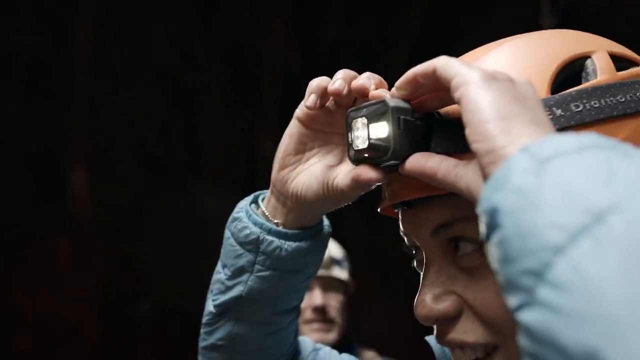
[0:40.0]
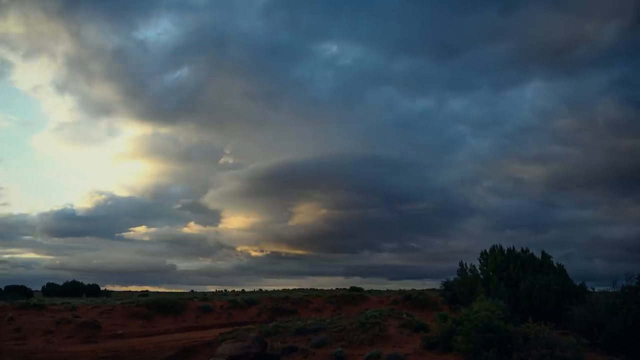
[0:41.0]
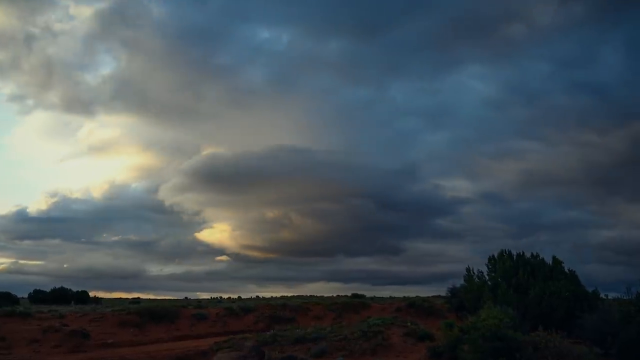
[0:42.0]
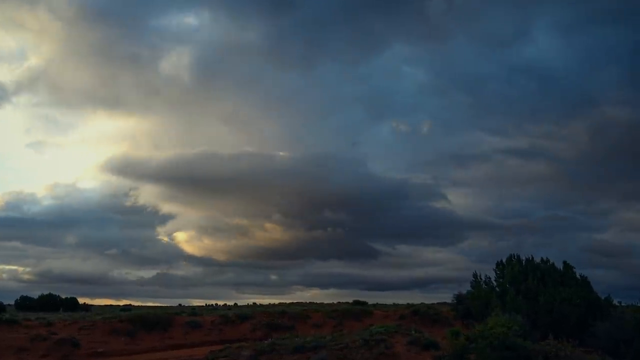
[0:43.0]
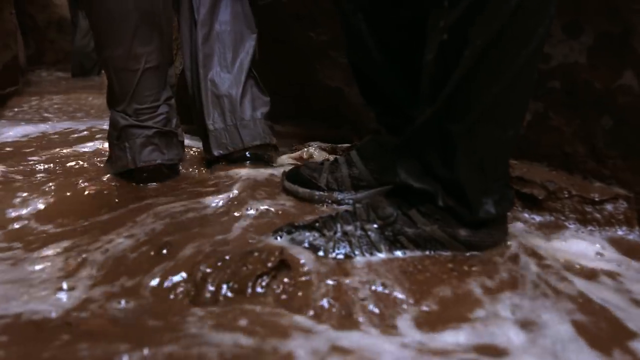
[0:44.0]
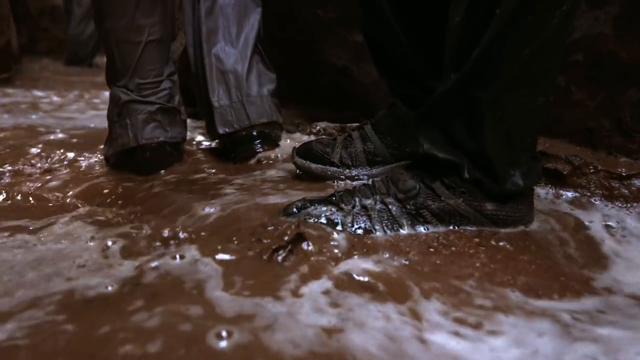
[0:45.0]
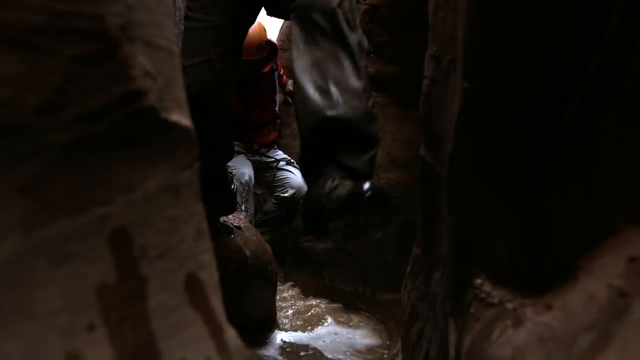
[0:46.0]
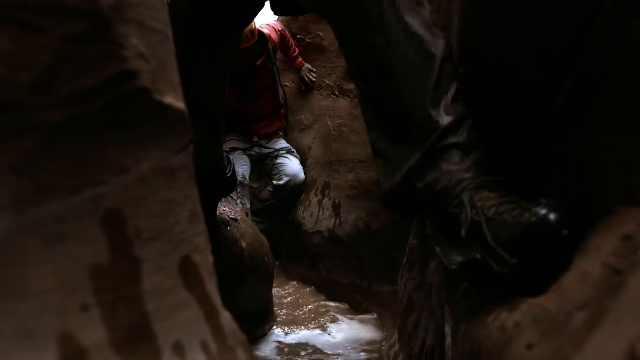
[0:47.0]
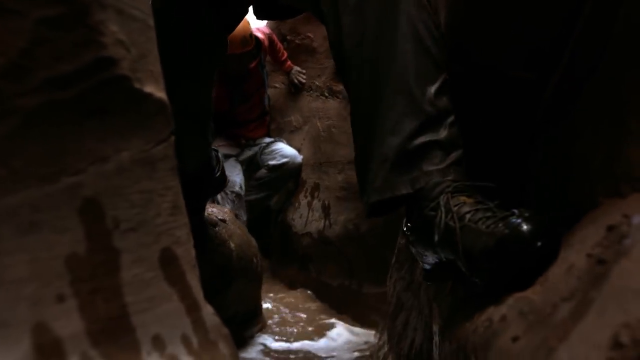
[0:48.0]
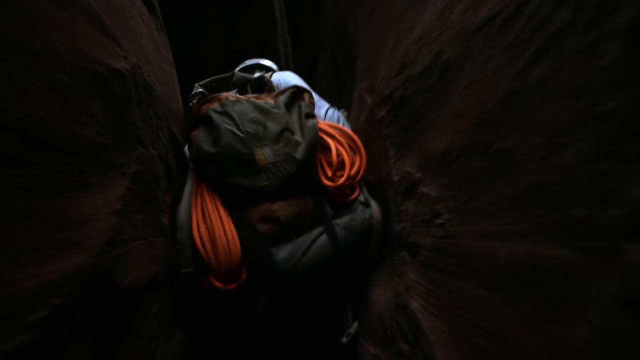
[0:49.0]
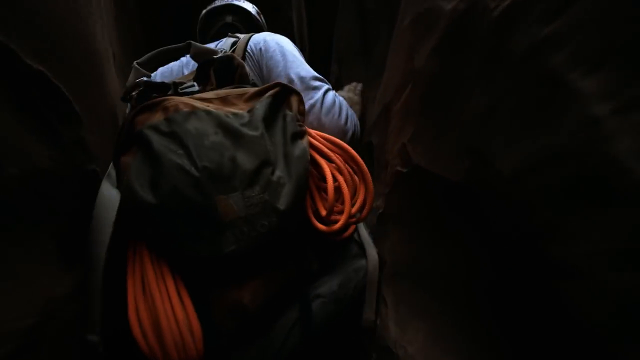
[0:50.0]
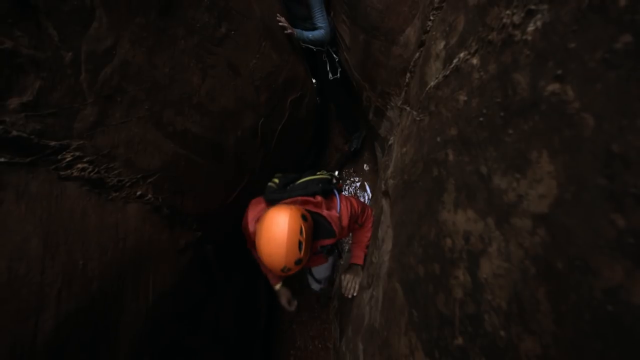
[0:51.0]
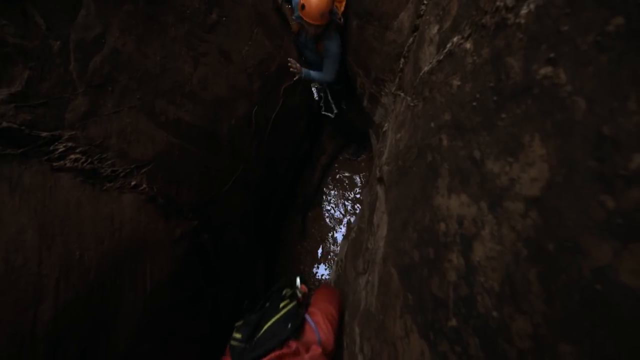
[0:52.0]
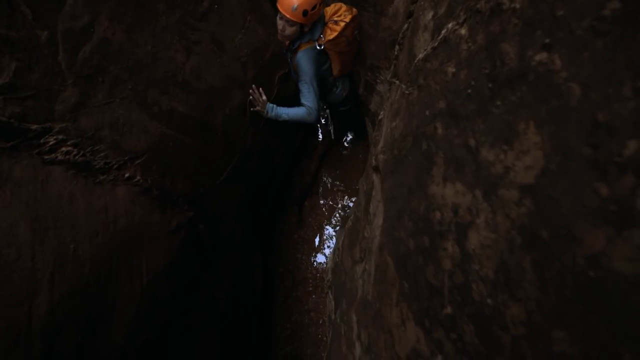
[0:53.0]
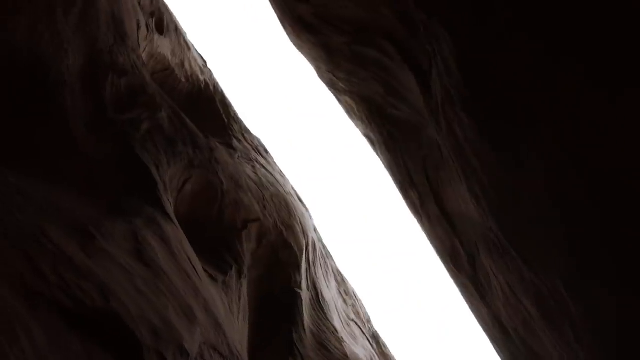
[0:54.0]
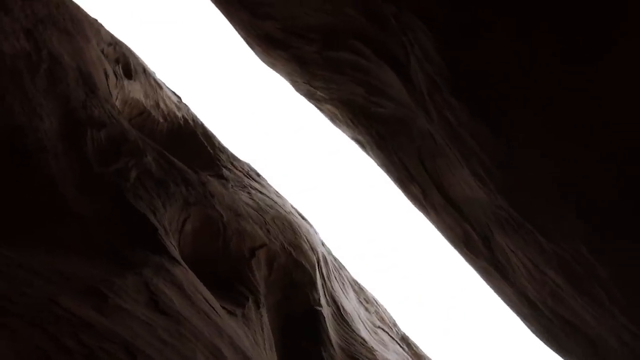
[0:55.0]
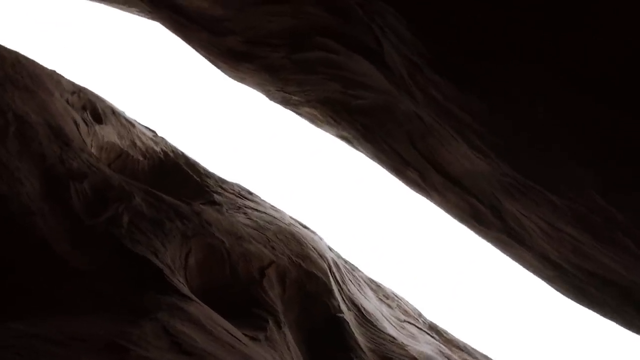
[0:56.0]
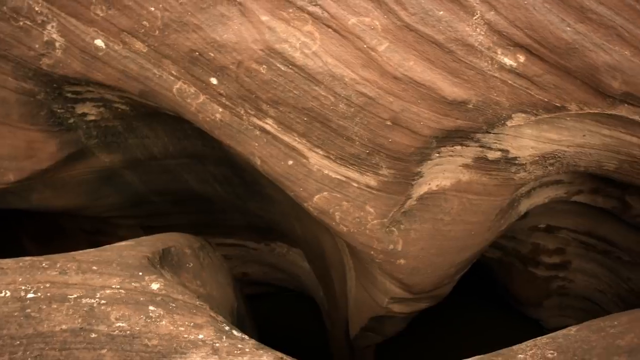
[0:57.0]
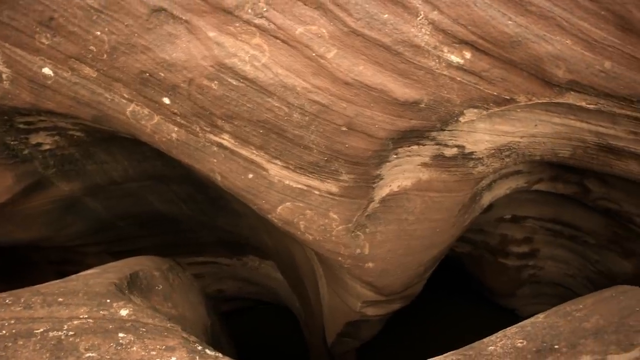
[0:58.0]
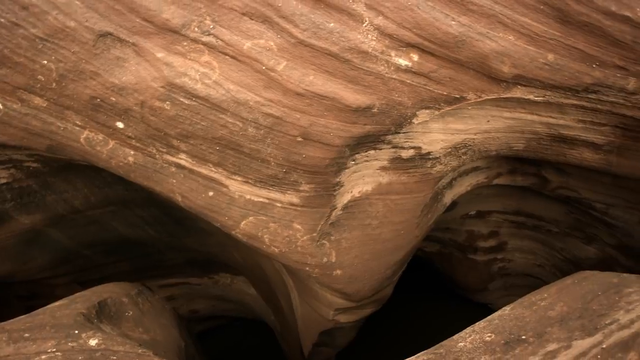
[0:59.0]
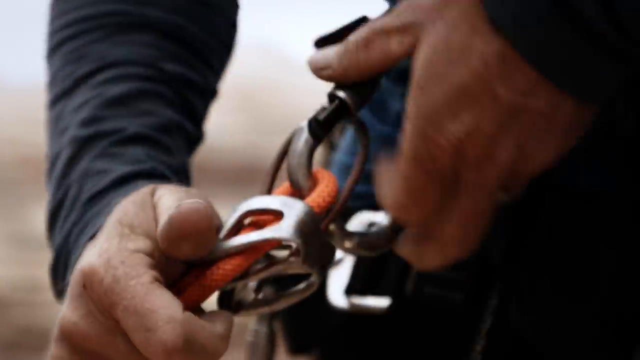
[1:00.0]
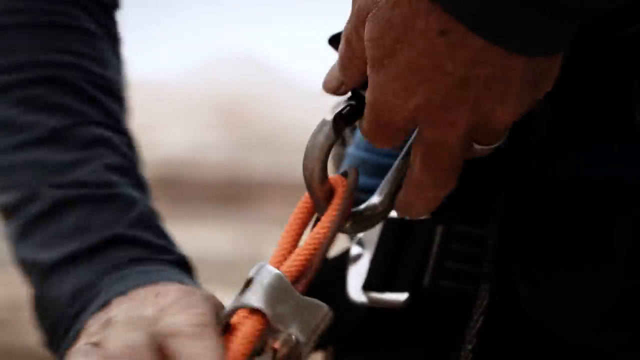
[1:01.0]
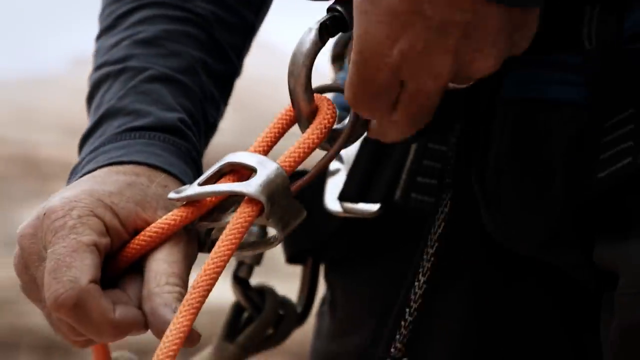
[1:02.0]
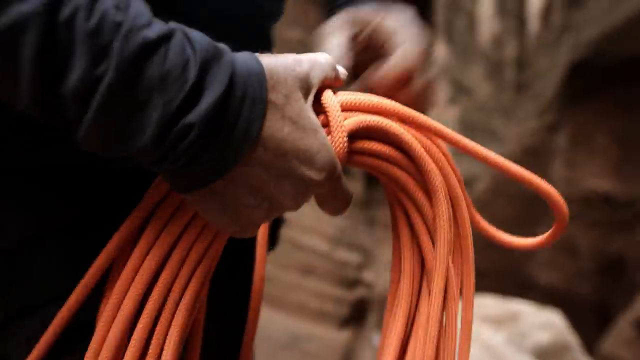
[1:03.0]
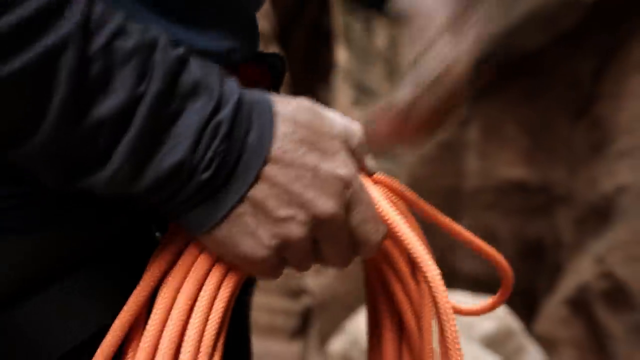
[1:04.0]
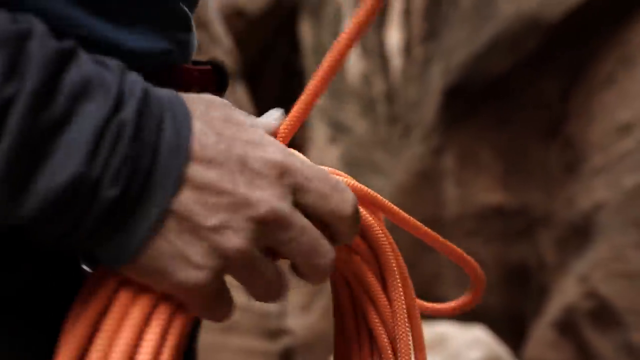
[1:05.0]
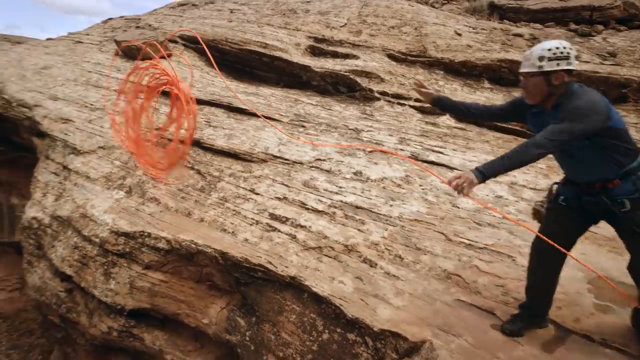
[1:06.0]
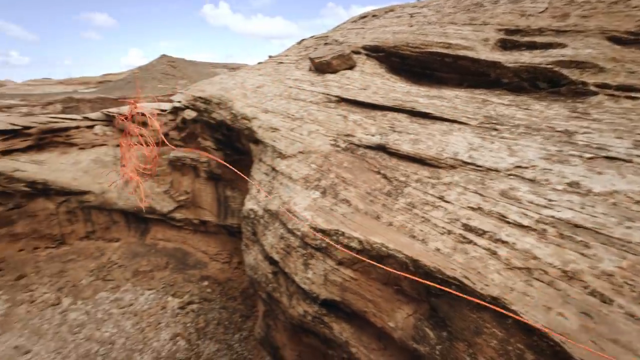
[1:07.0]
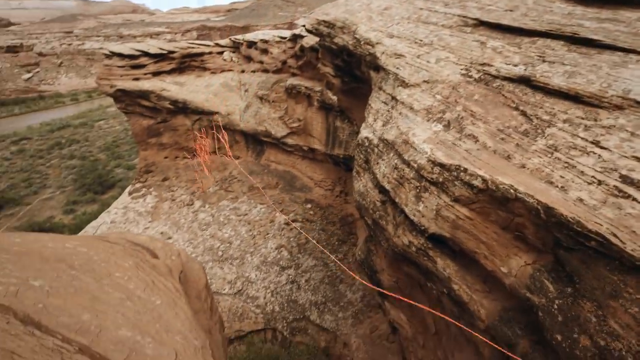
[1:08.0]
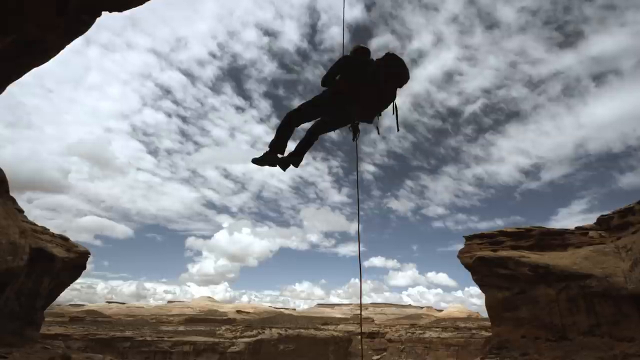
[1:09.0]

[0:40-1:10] The view moves along as the people walk; the weather seems to be pretty hard, and there is a lot of water in the hills and canals. All three people walk through a really narrow part. They then climb the cables to continue their climb, and a man jumps onto the roof using the cables.